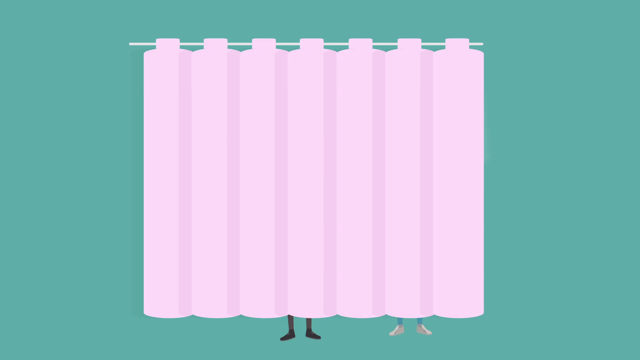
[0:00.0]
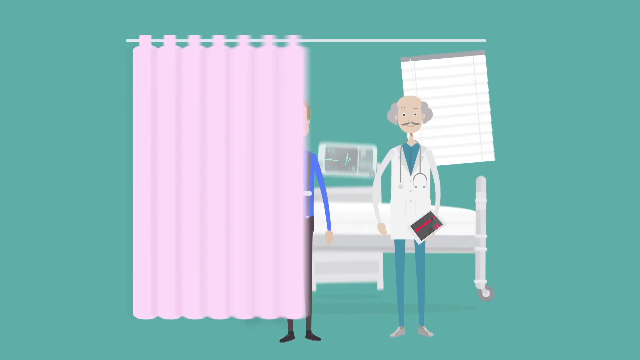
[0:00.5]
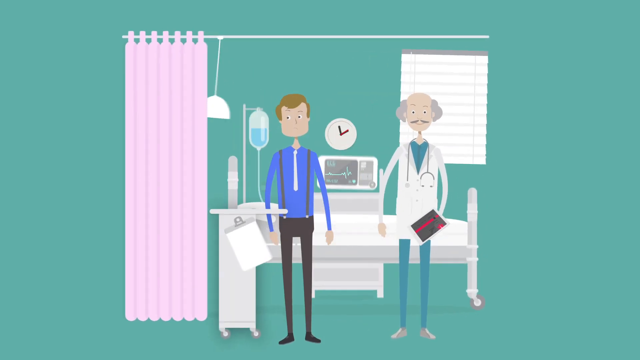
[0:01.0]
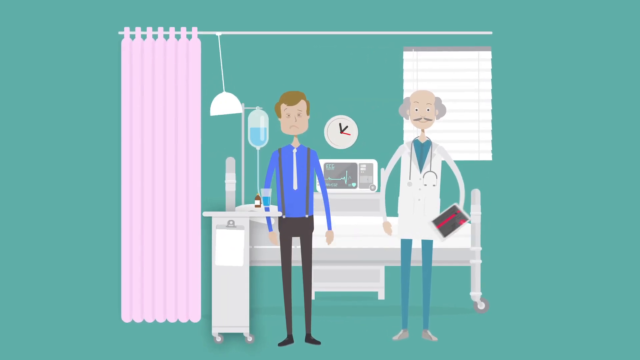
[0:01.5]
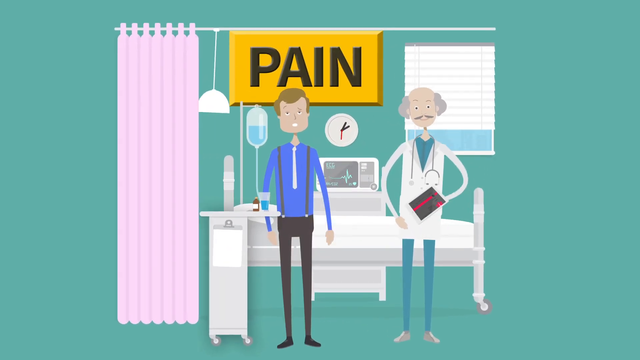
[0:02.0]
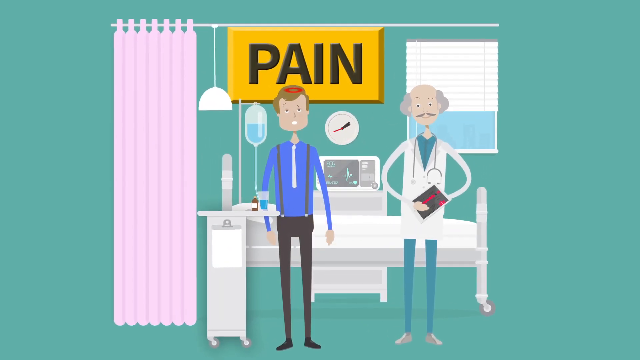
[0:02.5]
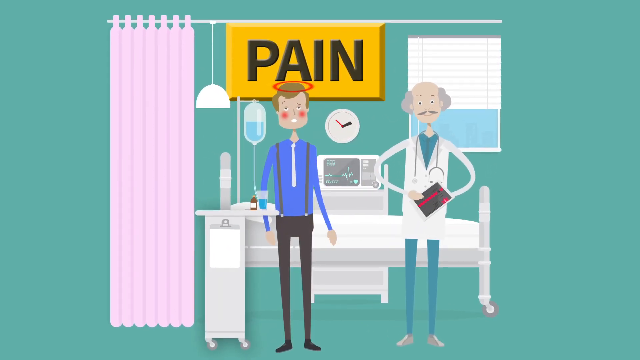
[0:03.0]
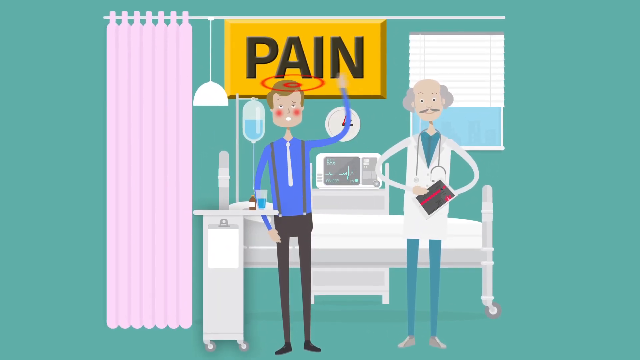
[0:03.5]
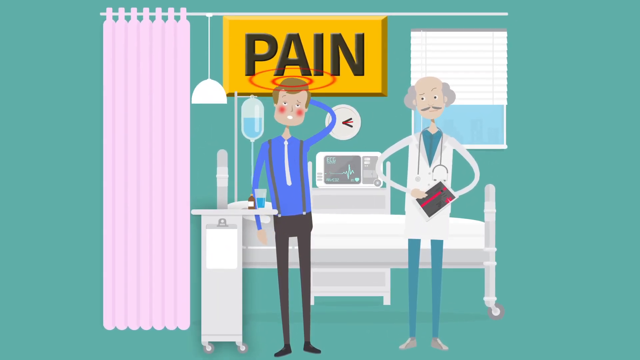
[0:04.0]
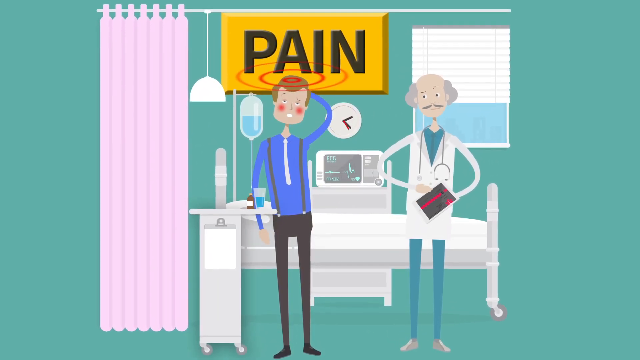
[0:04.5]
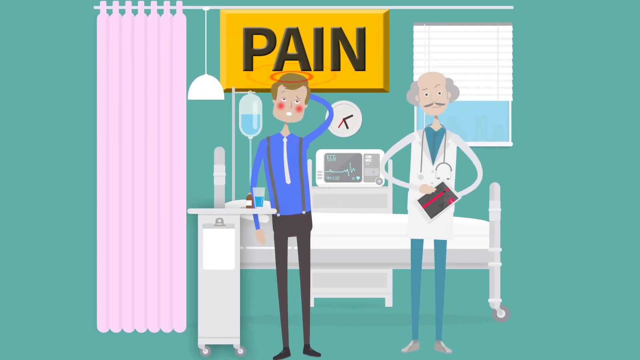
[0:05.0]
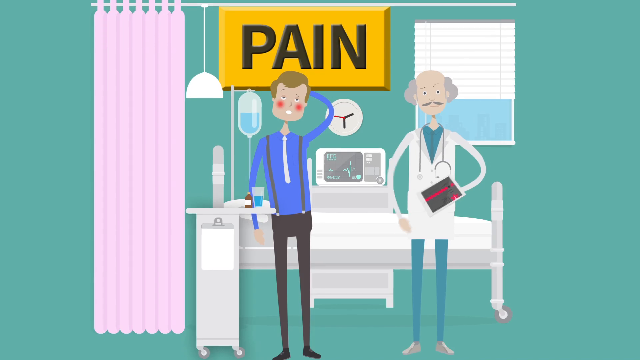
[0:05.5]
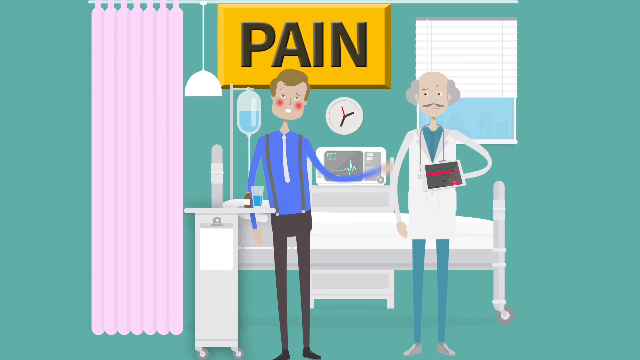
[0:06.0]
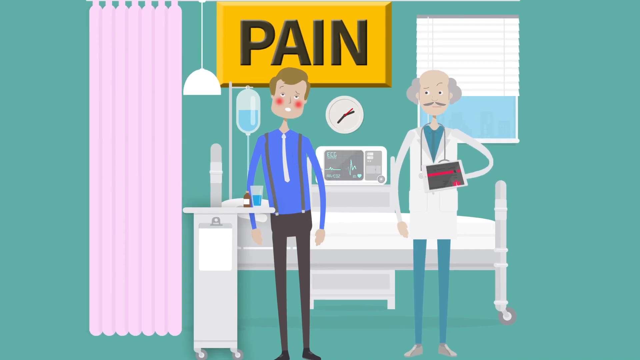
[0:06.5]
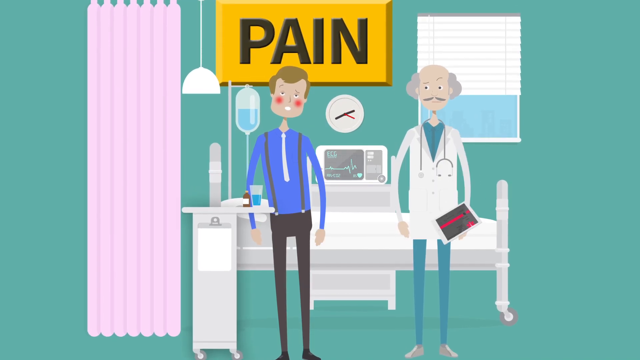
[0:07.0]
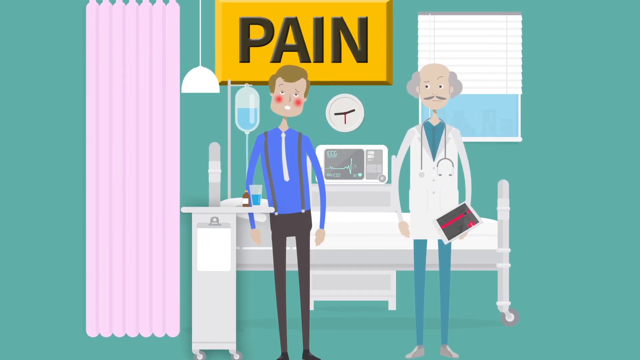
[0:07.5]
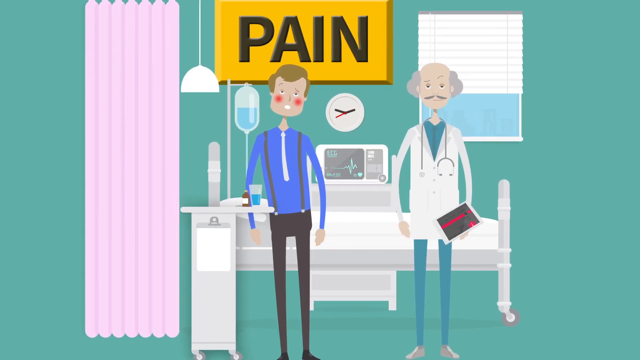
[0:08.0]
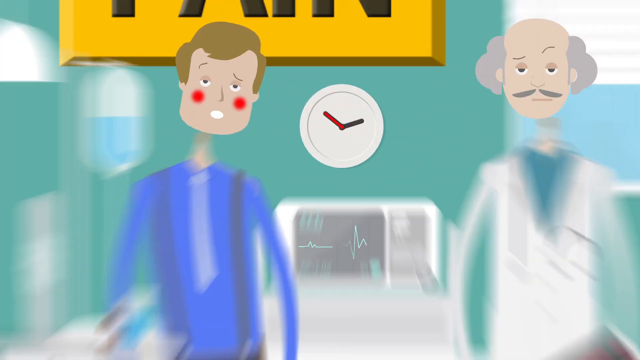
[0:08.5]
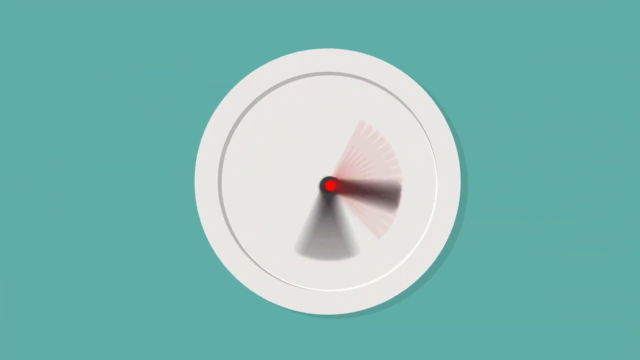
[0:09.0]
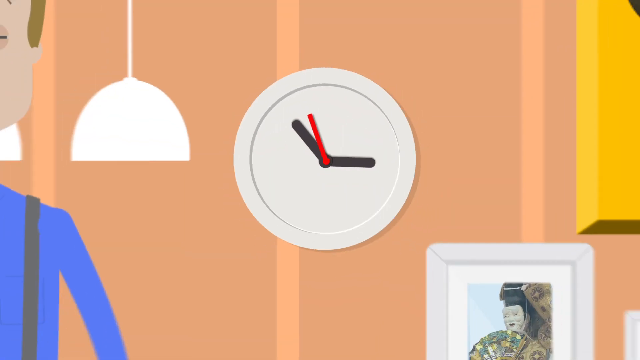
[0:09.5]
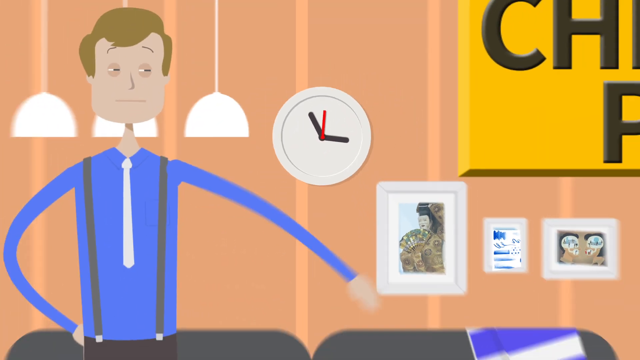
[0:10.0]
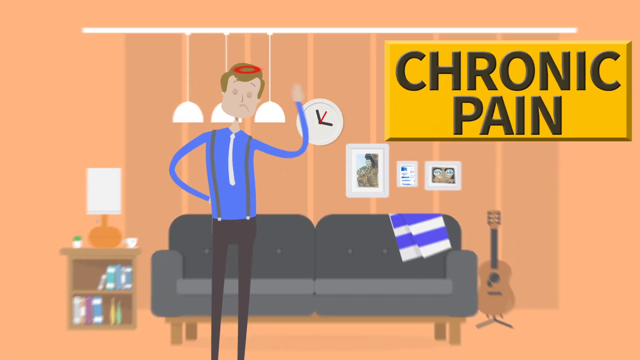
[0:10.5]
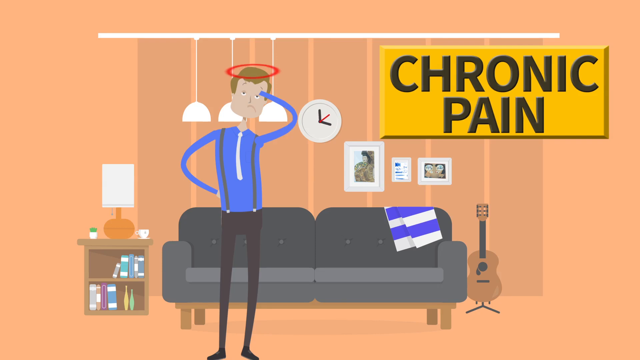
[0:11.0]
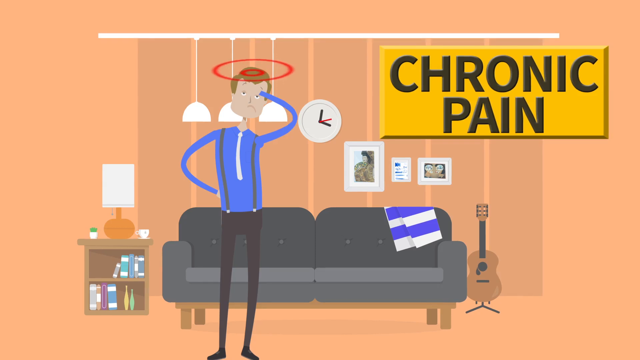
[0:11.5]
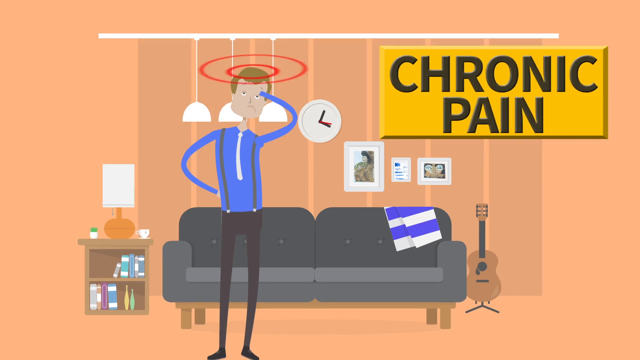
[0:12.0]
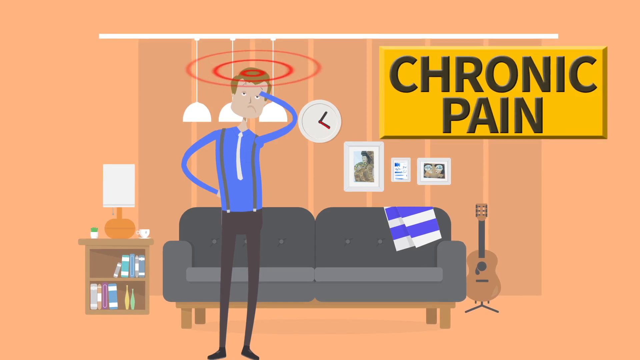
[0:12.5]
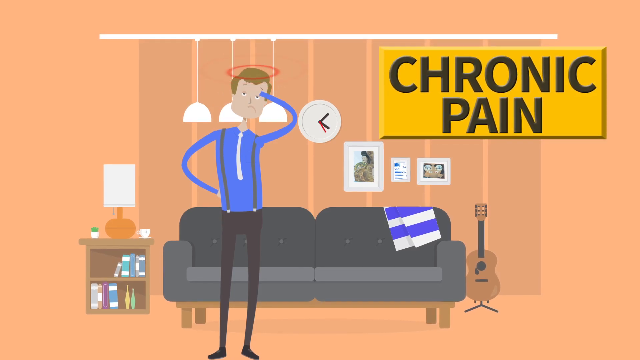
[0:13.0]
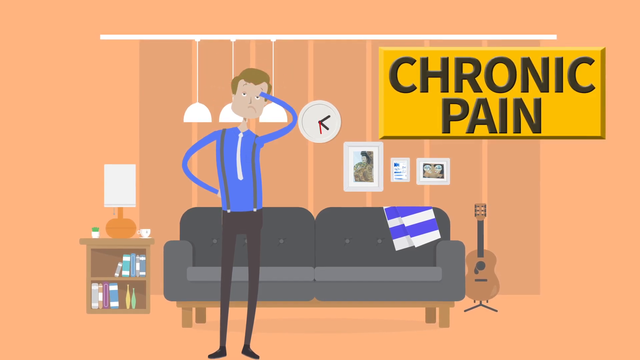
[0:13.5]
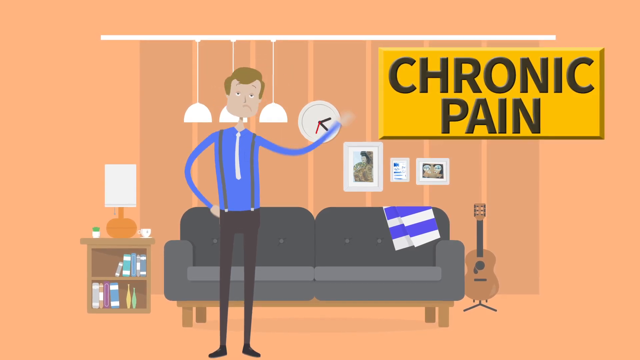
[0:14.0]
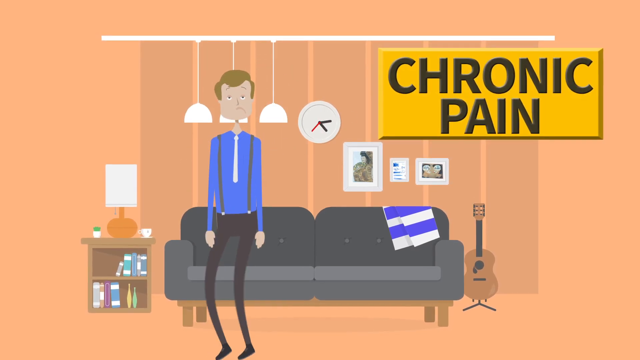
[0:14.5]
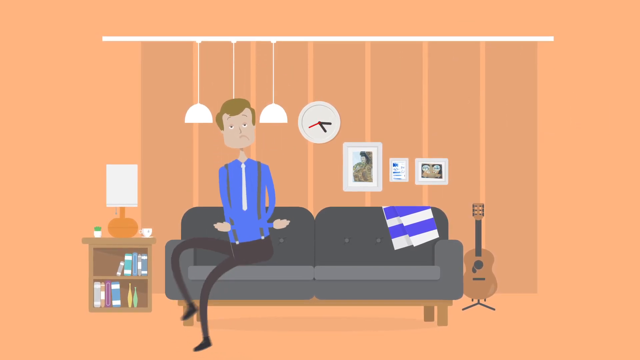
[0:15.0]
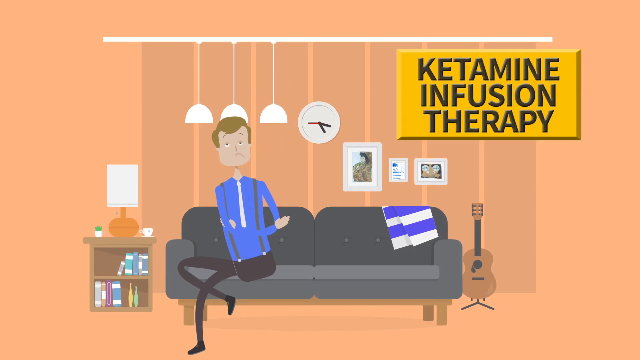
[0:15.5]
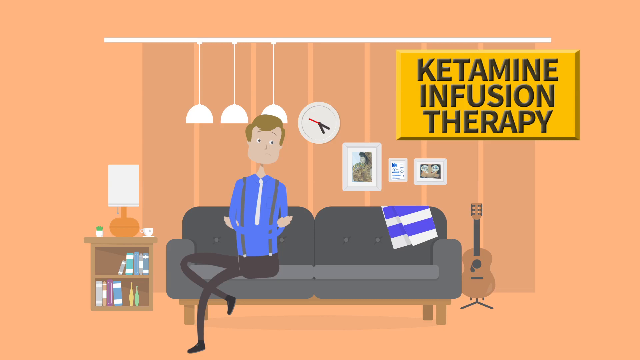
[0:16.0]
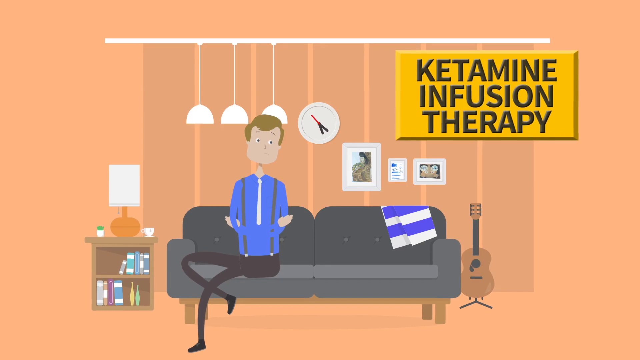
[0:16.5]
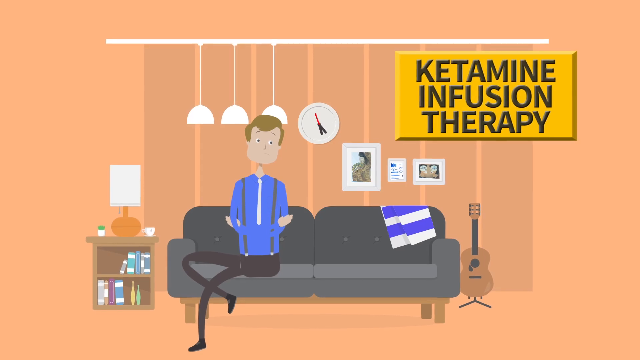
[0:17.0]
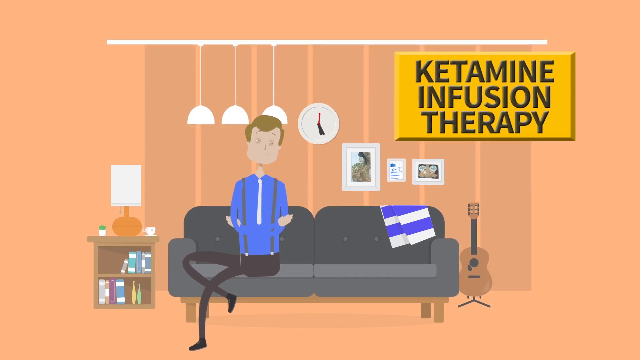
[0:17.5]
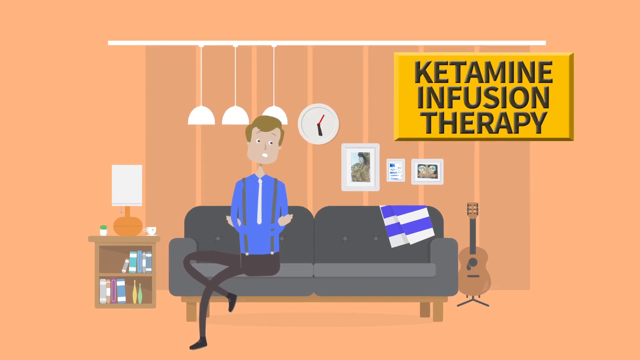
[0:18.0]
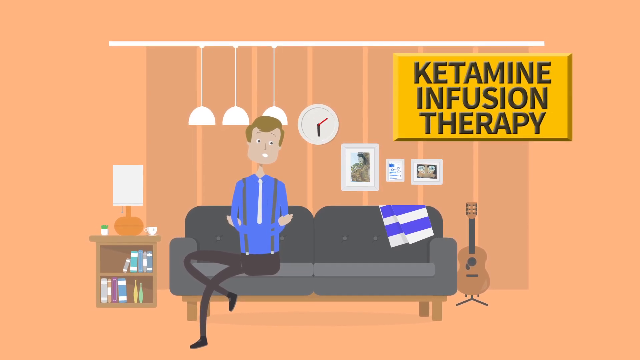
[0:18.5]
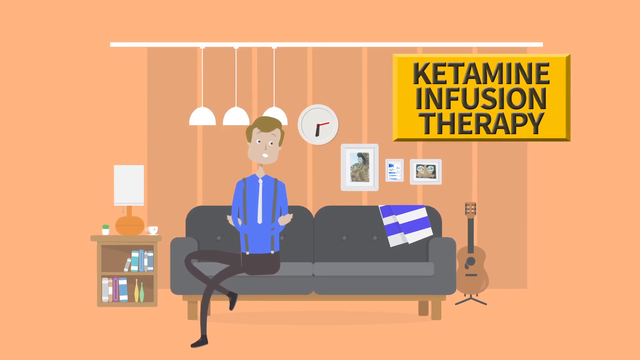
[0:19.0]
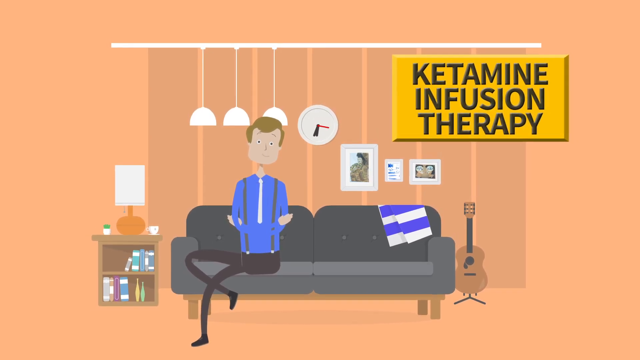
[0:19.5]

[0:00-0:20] The video opens on a turquoise background with a purple curtain over the screen. The curtain opens to reveal a doctor in a hospital room with a window, a bed, a monitor, an exam paper and an IV. The patient is shown, a clock appears on the wall, and the word "pain" shows up above his head. The doctor looks like he is in thought. The view zooms into the clock, and as the clock spins, another room appears with an orange background: a living room with a guitar, a sofa and the words "chronic pain". The patient is shown with a headache around him. The words "ketamine infusion therapy" then appear in black letters with a yellow background bordering them. The style is quite cartoonish and appears to use a kind of neutral color palette.